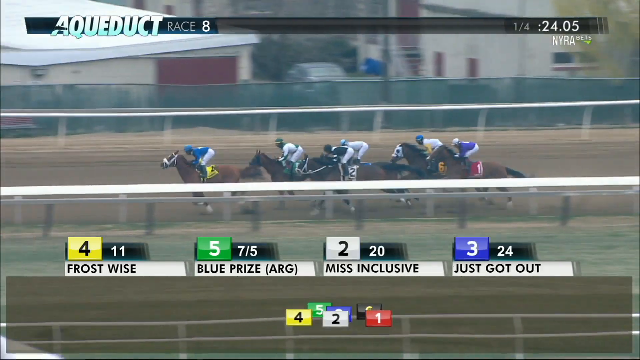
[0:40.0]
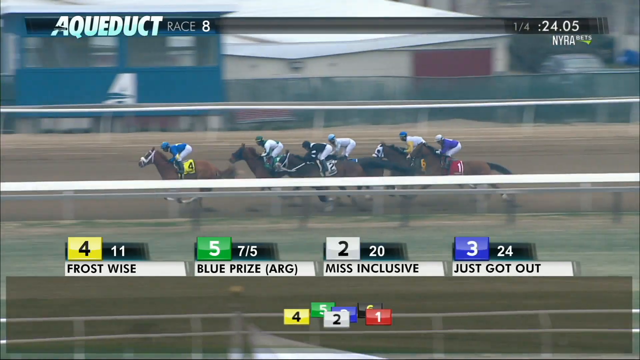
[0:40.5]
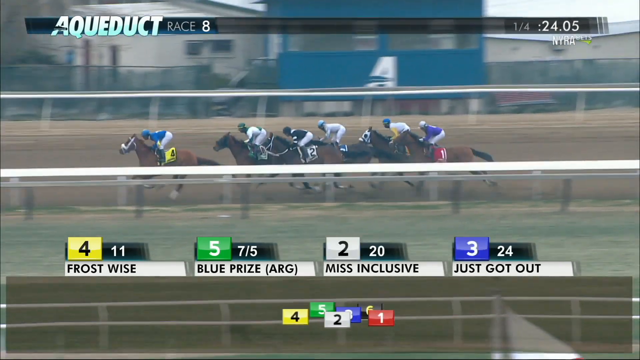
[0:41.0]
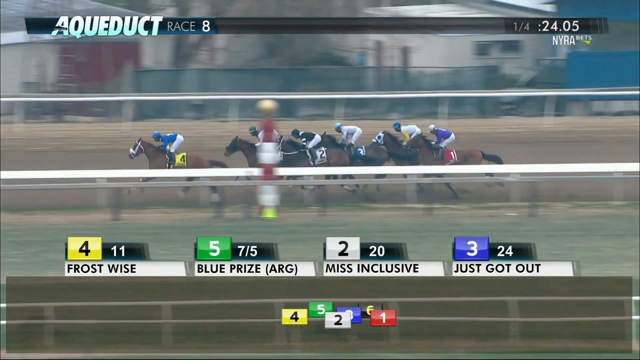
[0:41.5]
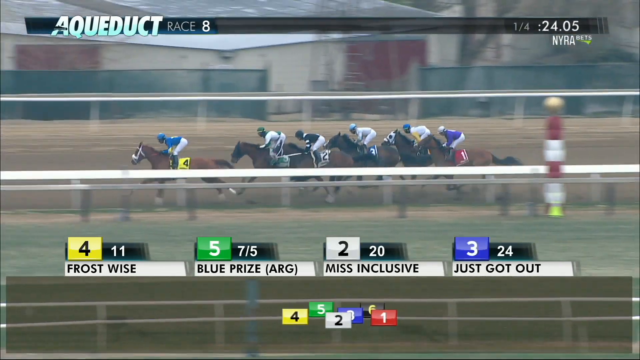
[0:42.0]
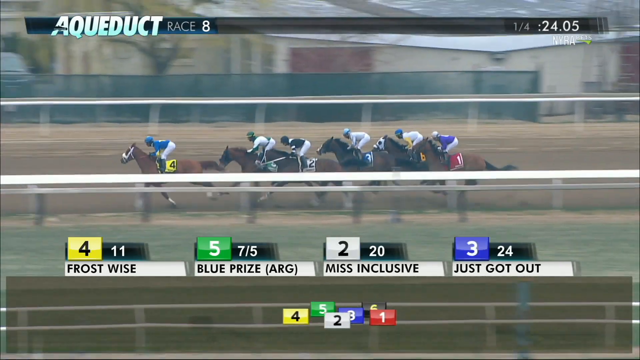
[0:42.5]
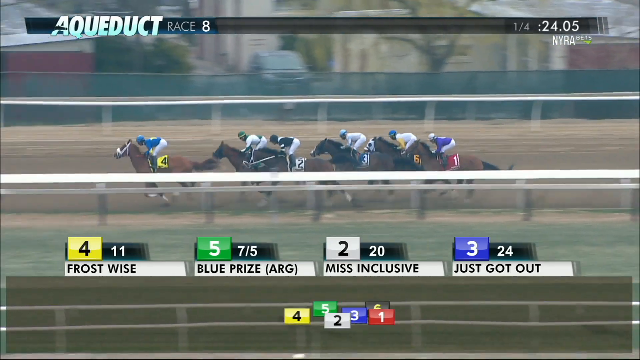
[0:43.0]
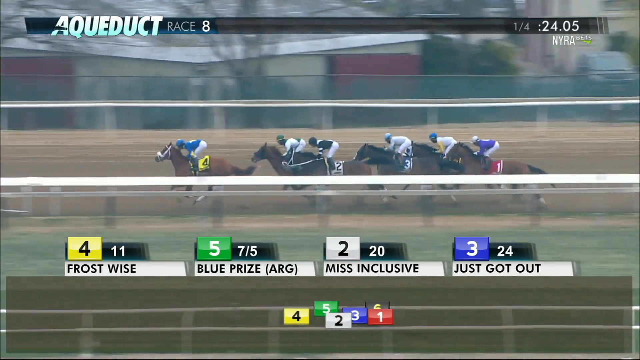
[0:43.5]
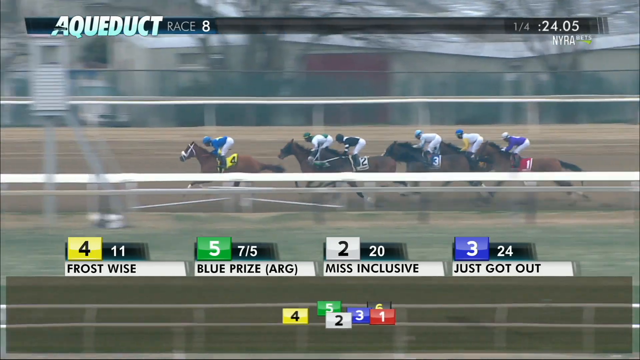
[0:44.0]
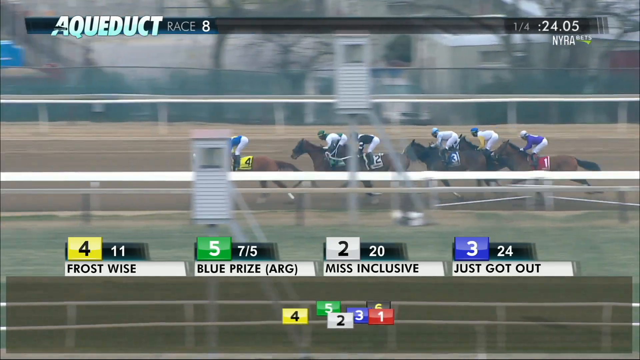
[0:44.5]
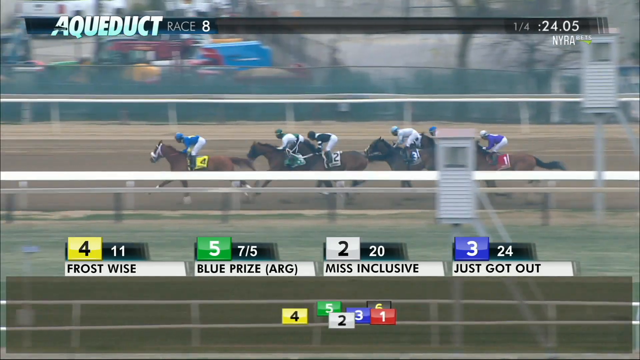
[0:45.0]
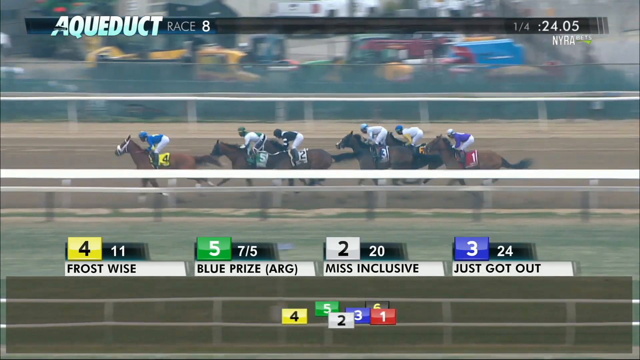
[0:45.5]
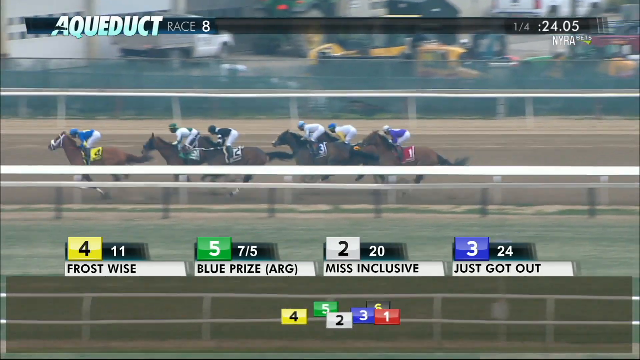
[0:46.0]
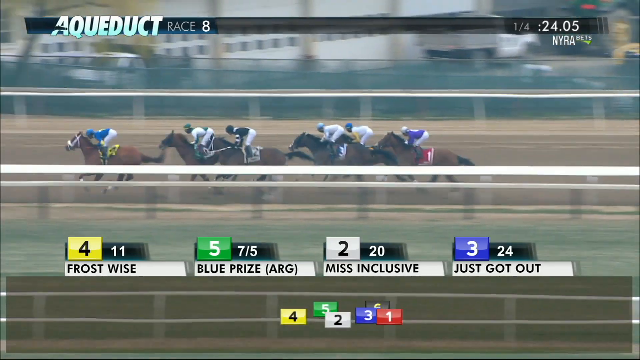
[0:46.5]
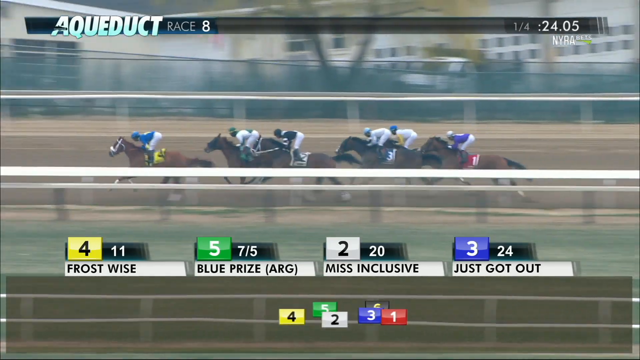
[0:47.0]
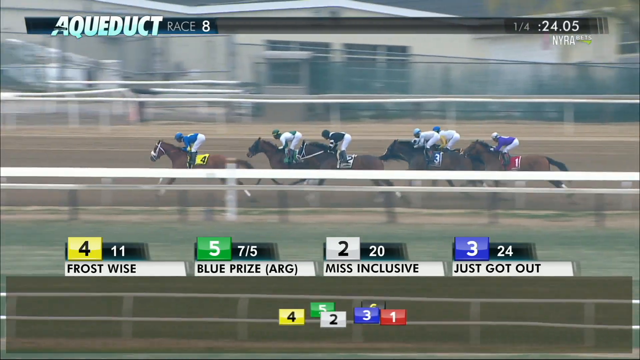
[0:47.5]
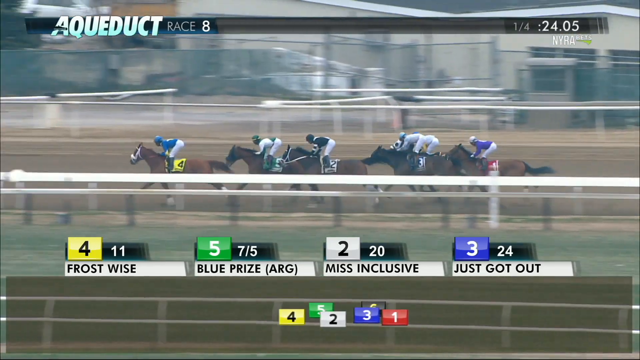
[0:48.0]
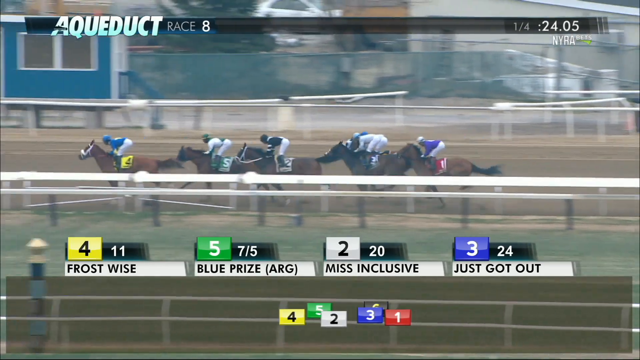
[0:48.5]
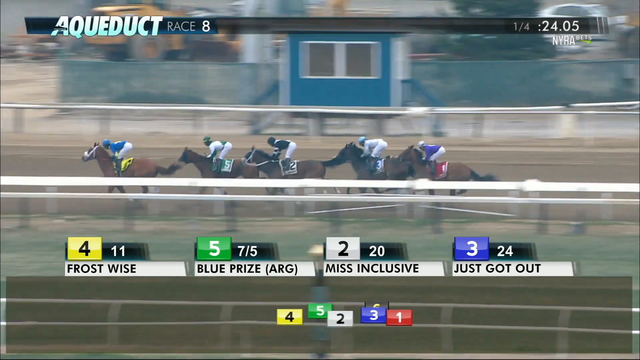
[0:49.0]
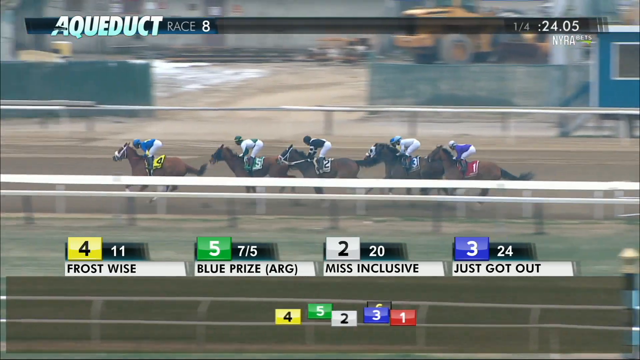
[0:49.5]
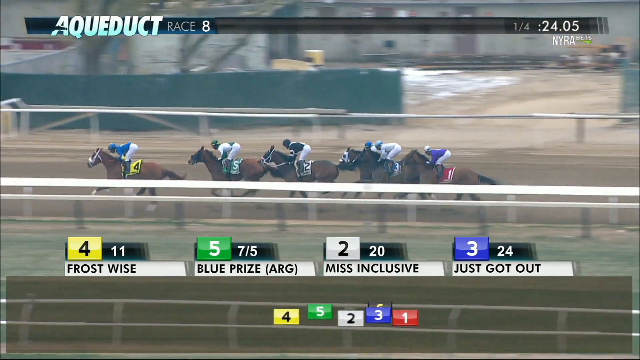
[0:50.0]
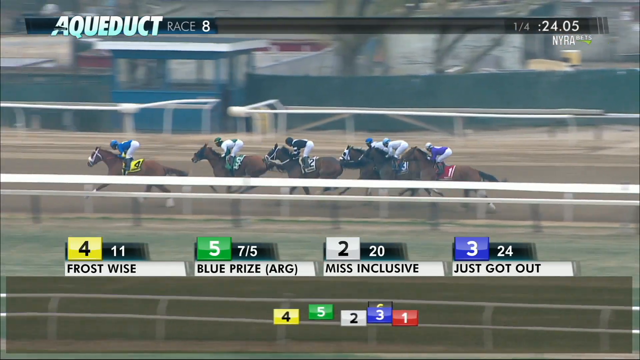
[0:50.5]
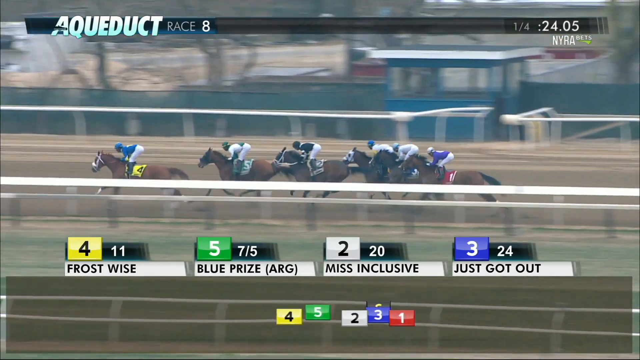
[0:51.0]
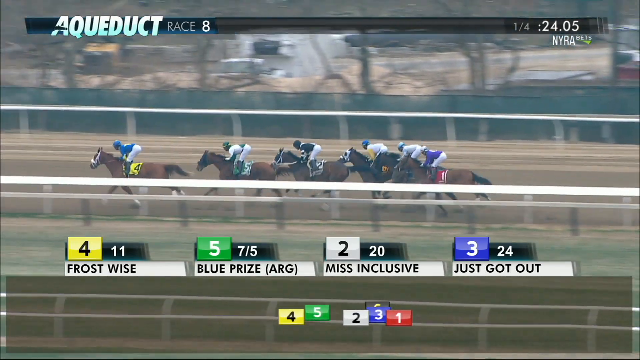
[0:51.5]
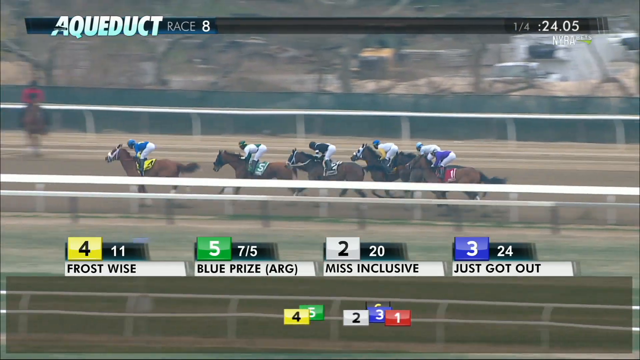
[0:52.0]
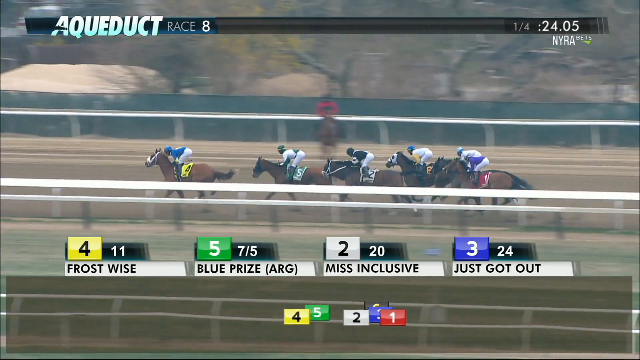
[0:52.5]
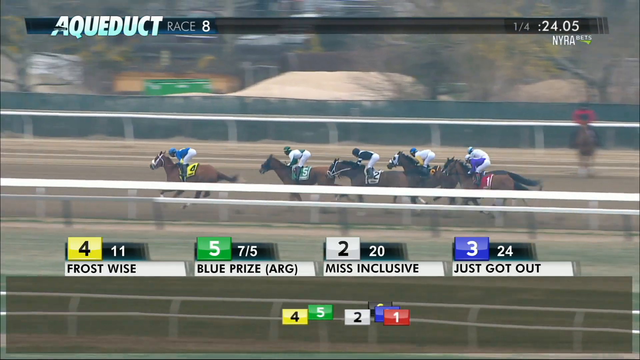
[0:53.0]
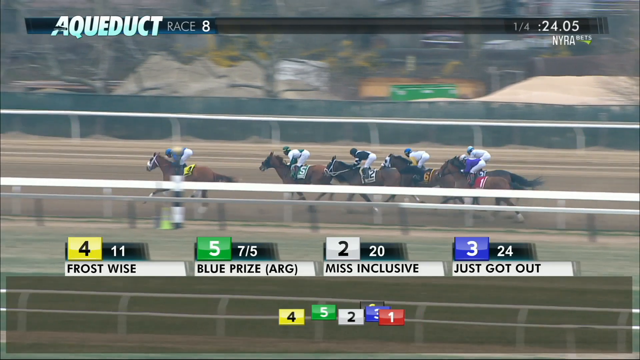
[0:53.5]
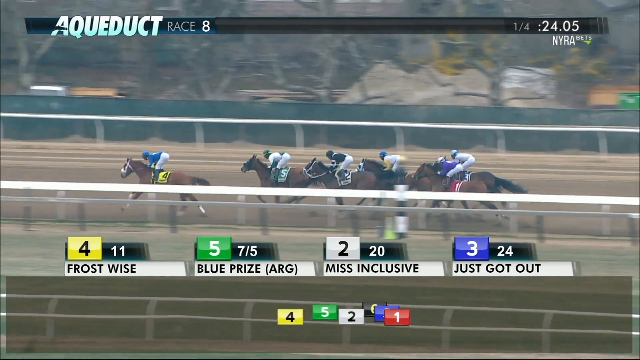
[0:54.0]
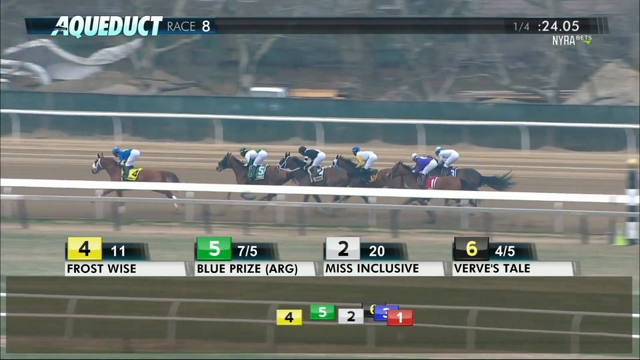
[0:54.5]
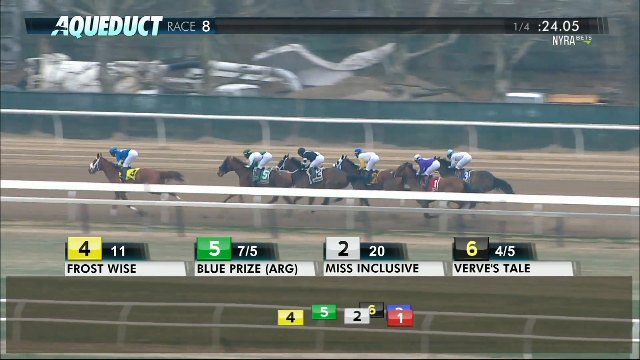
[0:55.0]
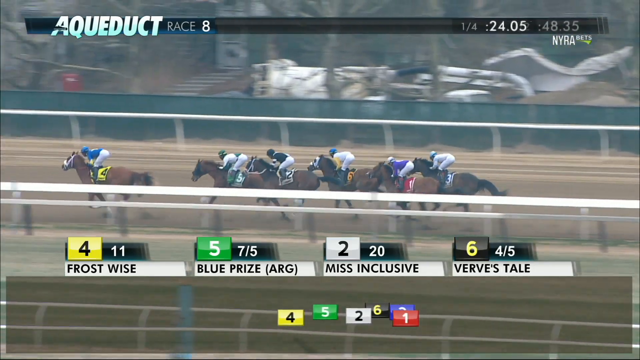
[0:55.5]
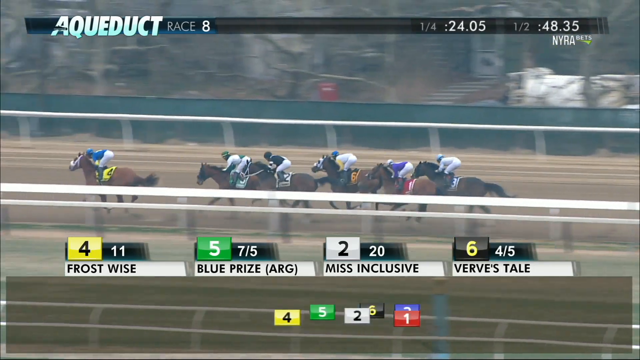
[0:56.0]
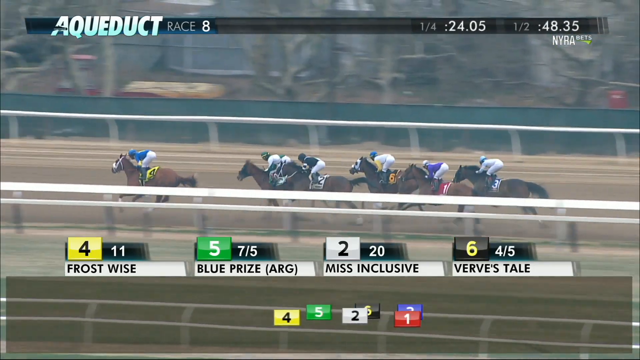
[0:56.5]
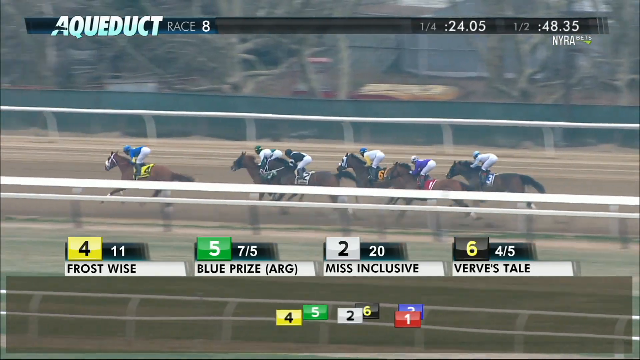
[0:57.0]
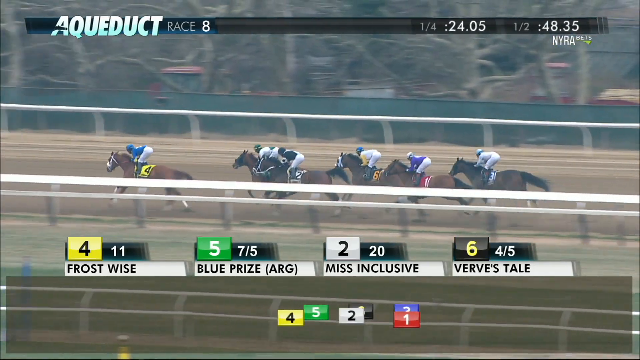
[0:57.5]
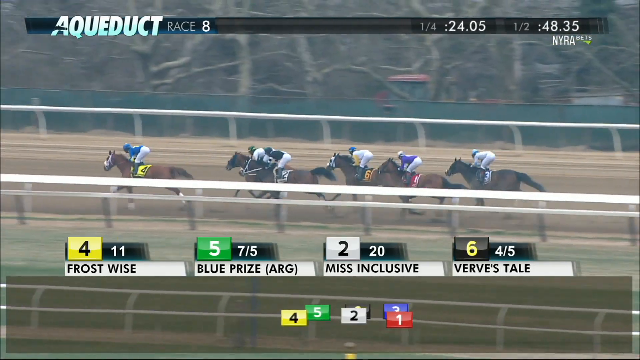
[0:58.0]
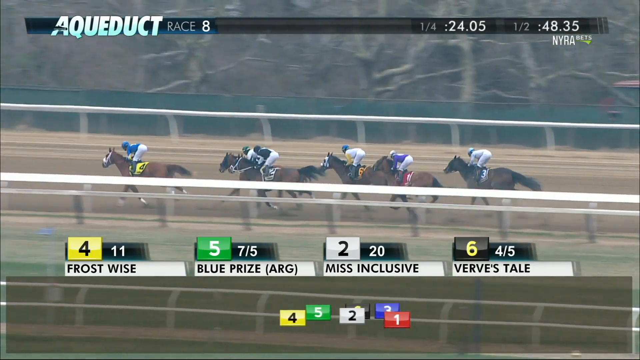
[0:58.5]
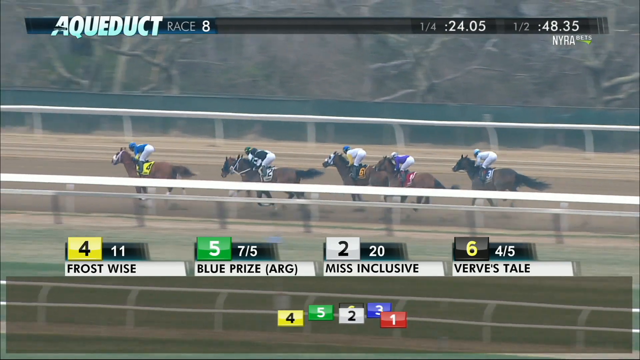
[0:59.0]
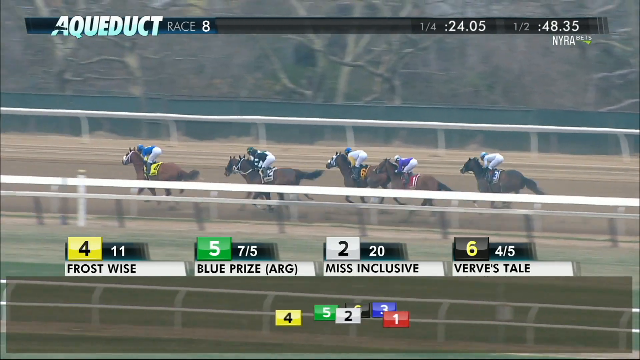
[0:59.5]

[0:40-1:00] The race continues with Frost Wise in first, Blue Prize second, Miss Inclusive third, and Just Got Out fourth, in a very close race among those horses. They all become more bunched up, but Frost Wise is still clearly in first as they race along the back stretch, moving fast, with the order unchanged. Split times are put up on screen: the quarter mile at 24.05 and then the half mile at 48.35 seconds.